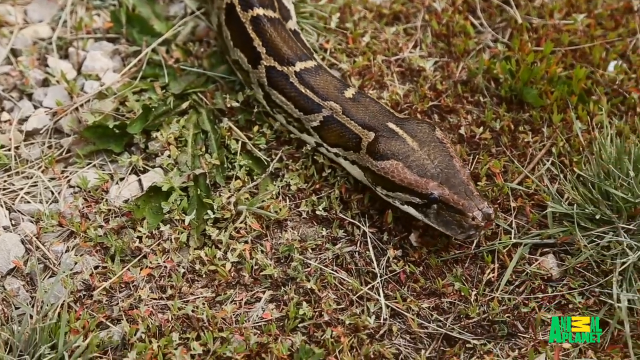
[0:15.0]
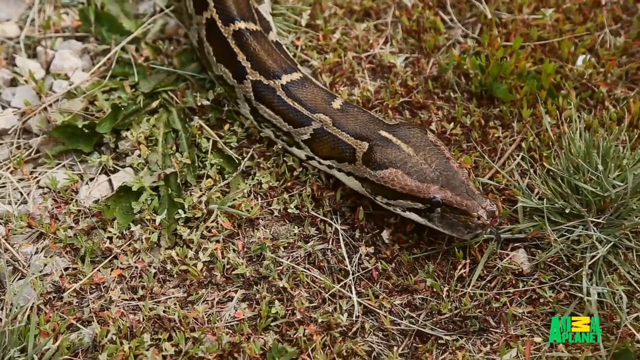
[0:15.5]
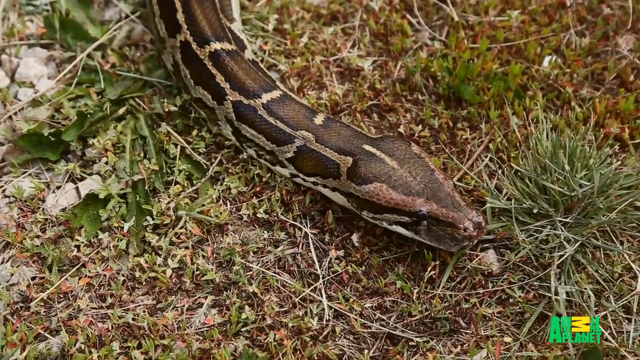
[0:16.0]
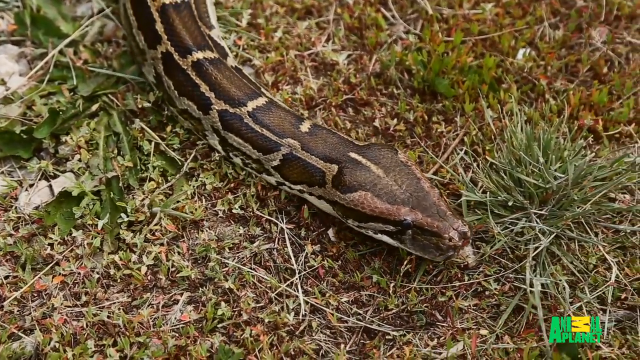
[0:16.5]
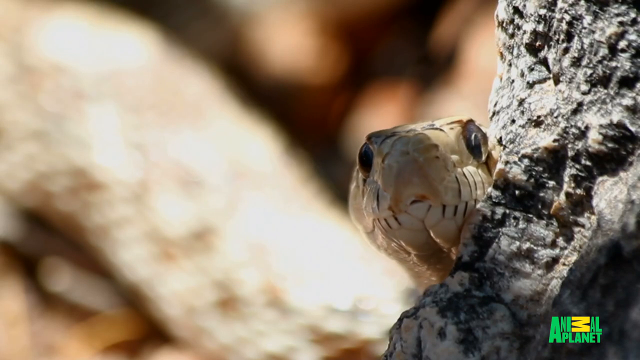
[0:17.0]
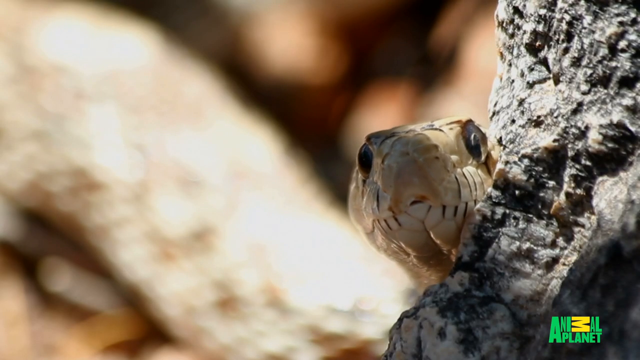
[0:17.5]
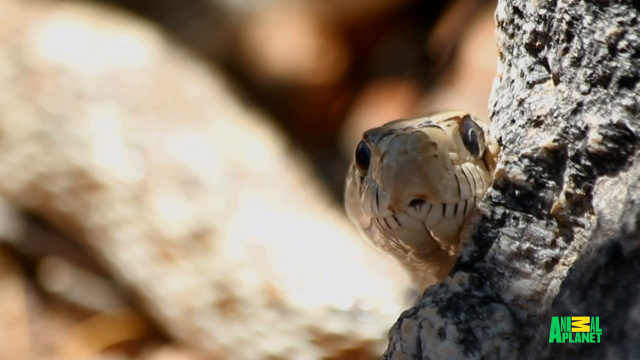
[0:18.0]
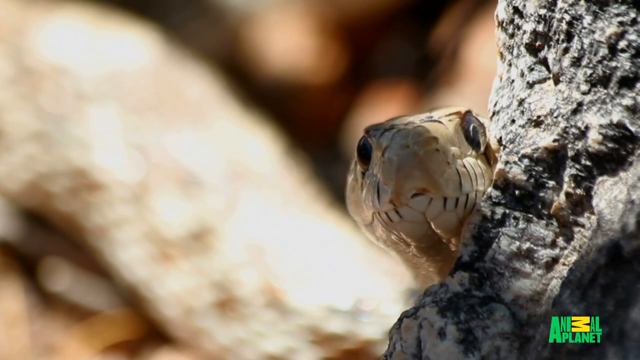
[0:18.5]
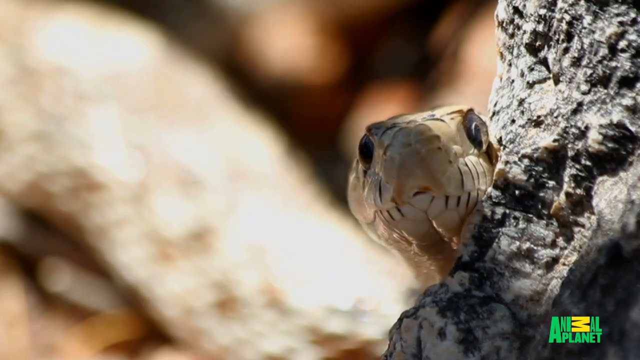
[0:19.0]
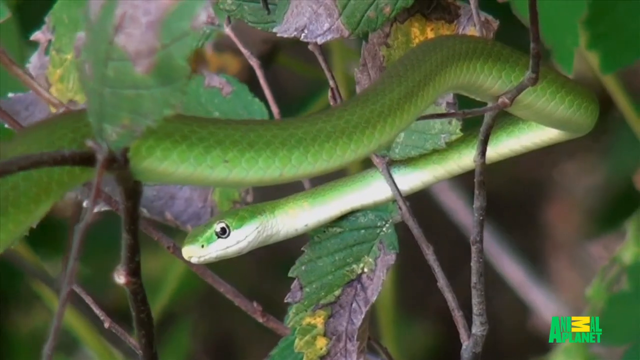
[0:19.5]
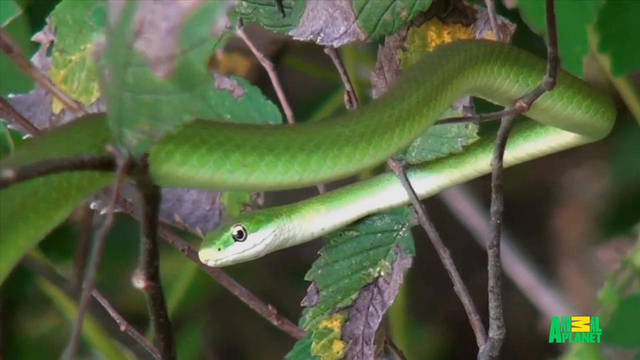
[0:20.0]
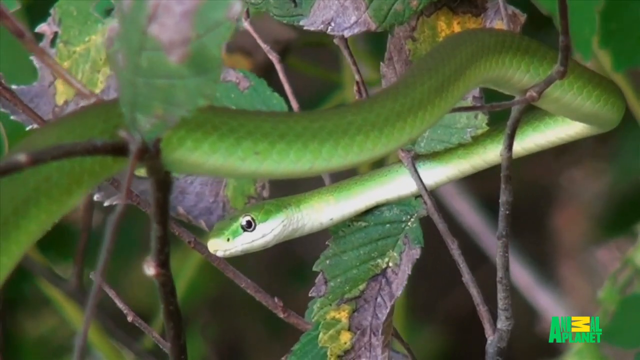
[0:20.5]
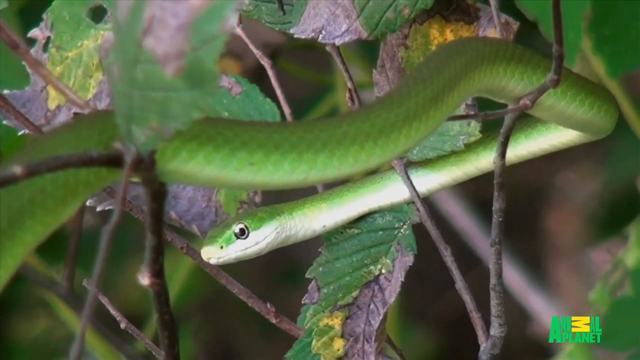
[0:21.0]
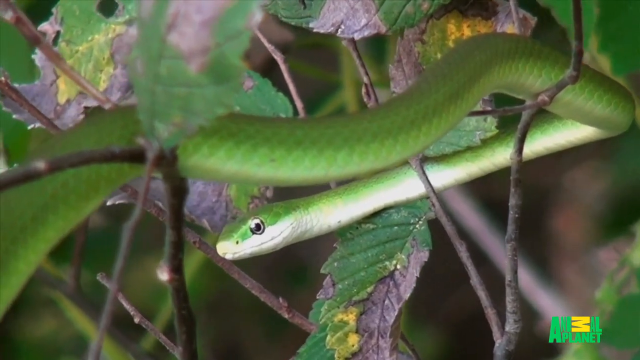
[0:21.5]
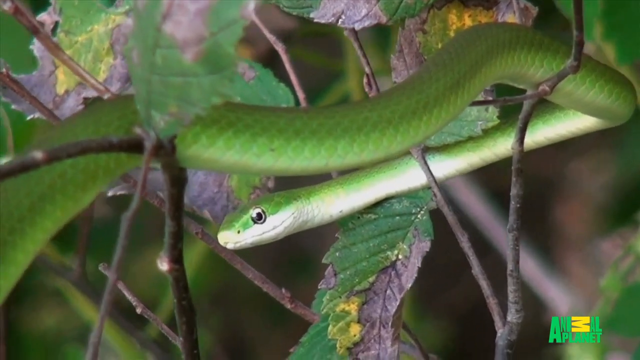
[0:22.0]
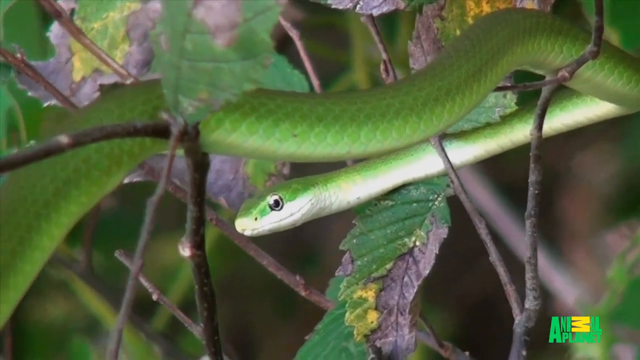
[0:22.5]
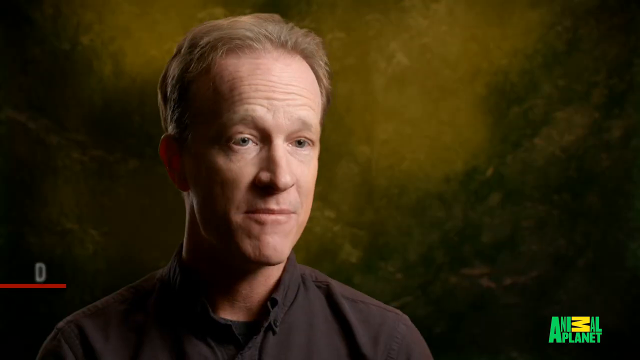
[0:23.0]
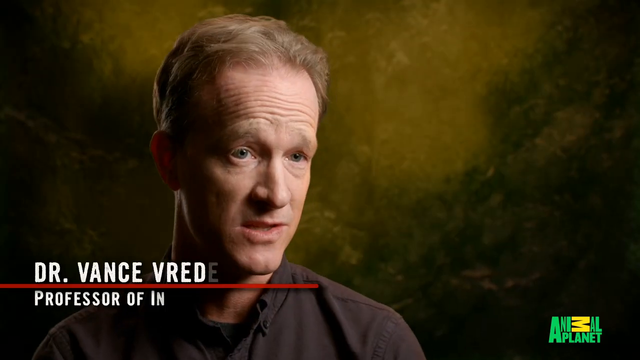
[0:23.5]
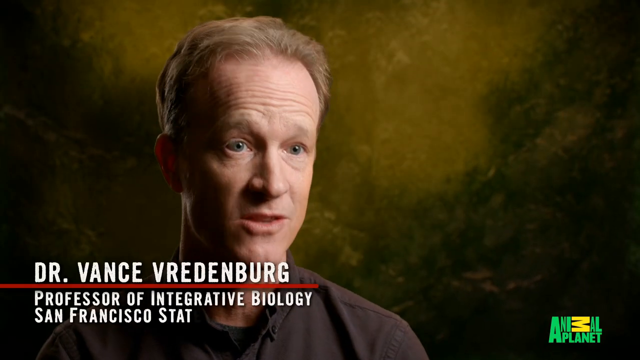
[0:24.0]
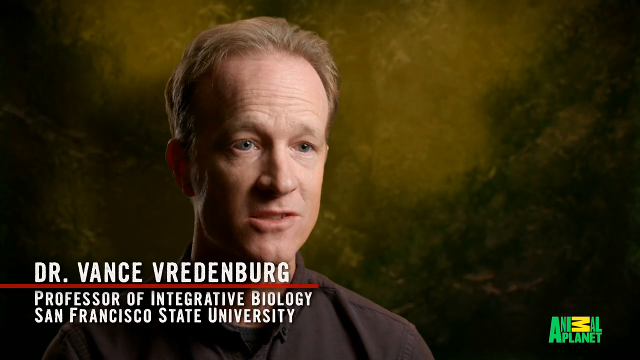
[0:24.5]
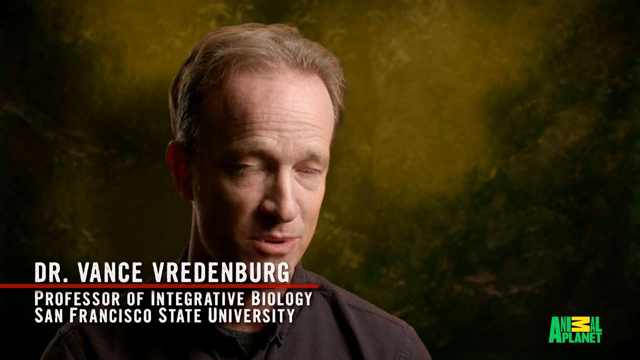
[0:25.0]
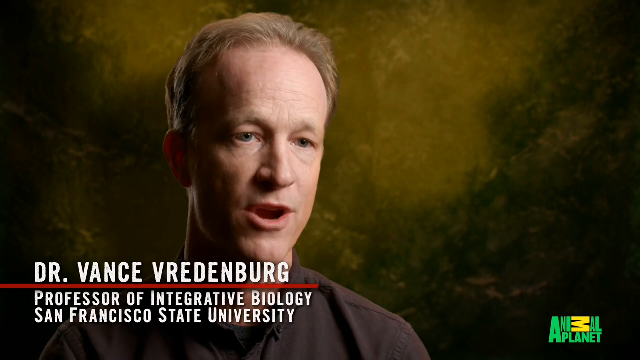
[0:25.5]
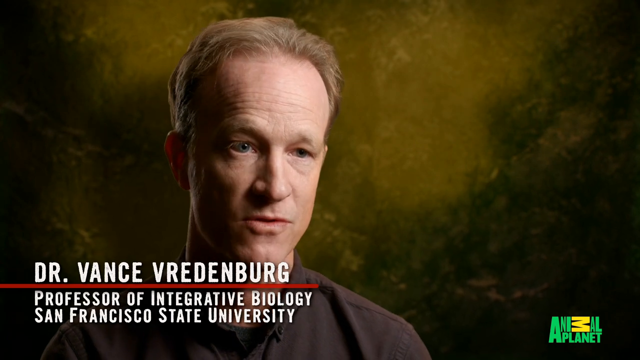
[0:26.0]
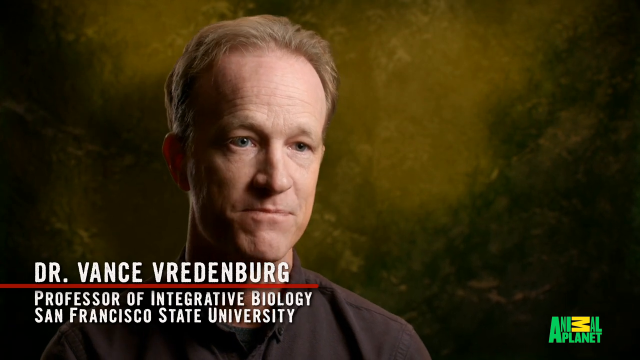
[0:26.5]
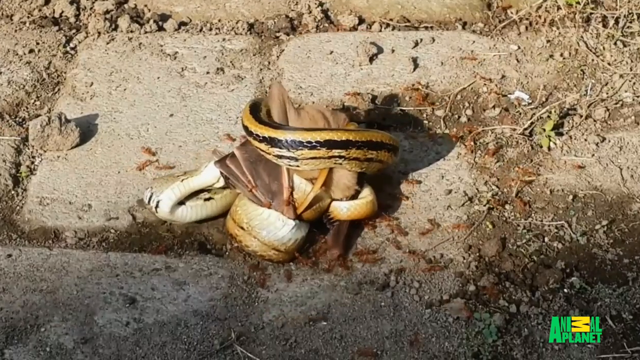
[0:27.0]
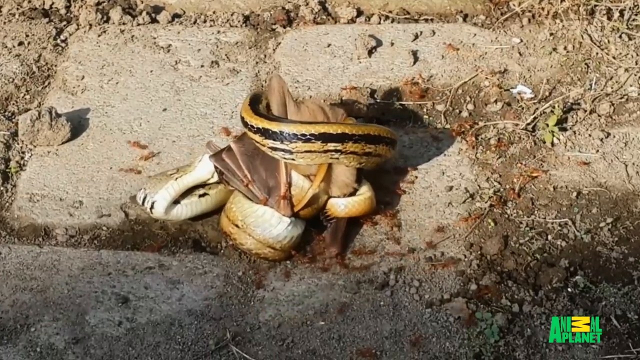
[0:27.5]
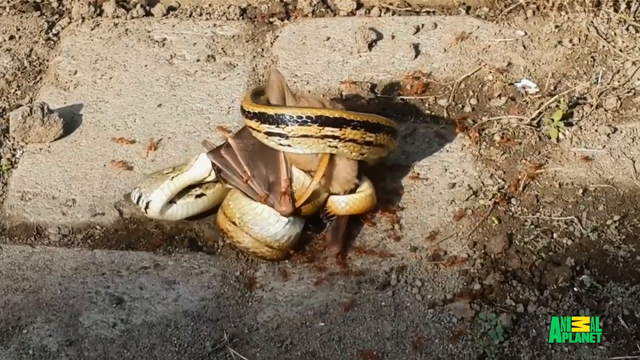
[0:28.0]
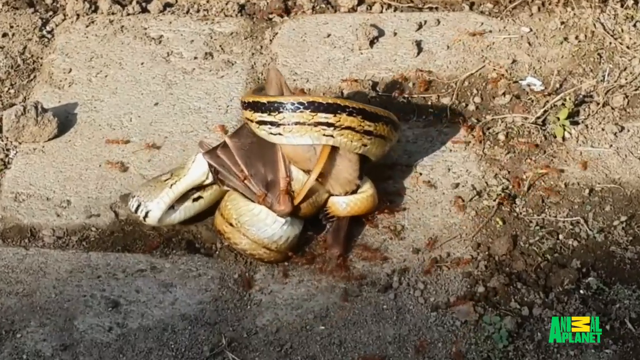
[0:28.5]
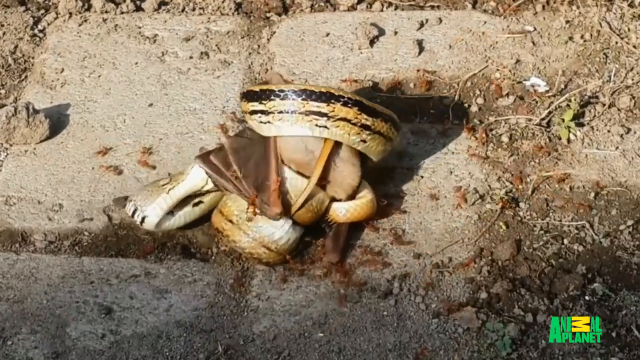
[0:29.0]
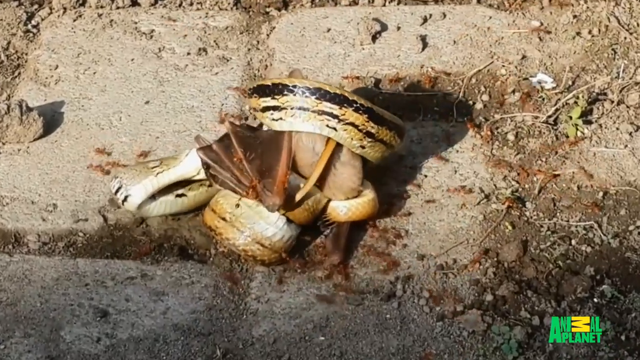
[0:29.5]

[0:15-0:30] The snake is coiled up around a bat and appears to be trying to eat it. Many red and brown ants crawl all over the bat and the snake as they fight. The video switches back to the middle-aged man giving an interview, who has sort of light sandy blonde hair that is thinning on top. The snake has black or dark brown stripes and dots. The ground below them appears to be concrete, with twigs and dirt mixed in. The snake bites the bat again. There appears to be some moss on the bricks.